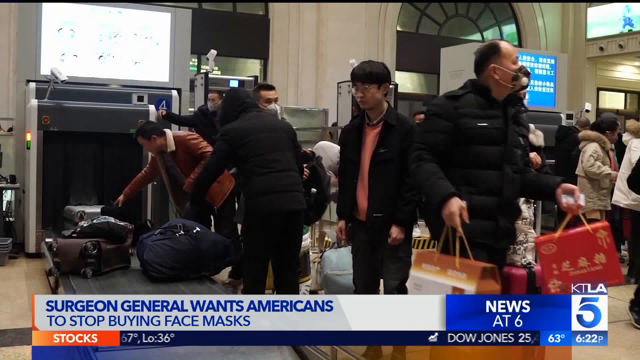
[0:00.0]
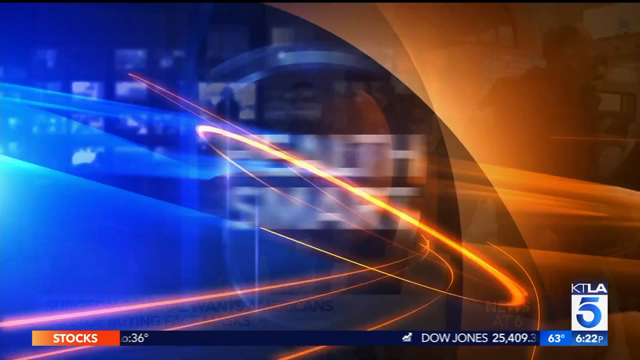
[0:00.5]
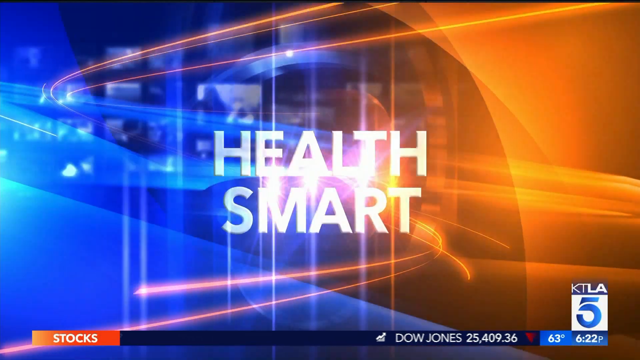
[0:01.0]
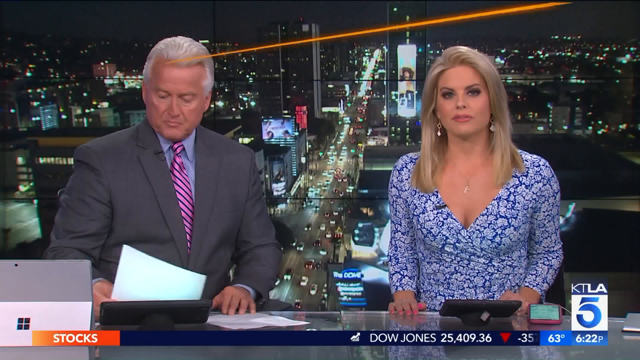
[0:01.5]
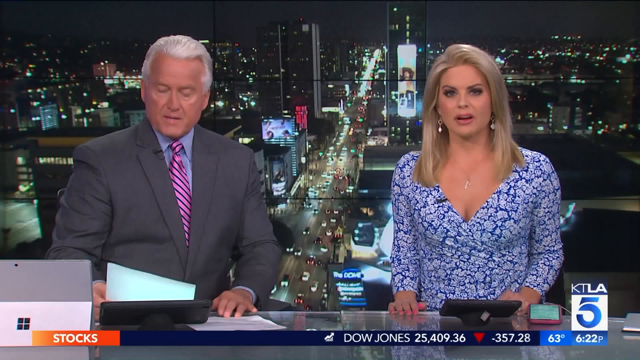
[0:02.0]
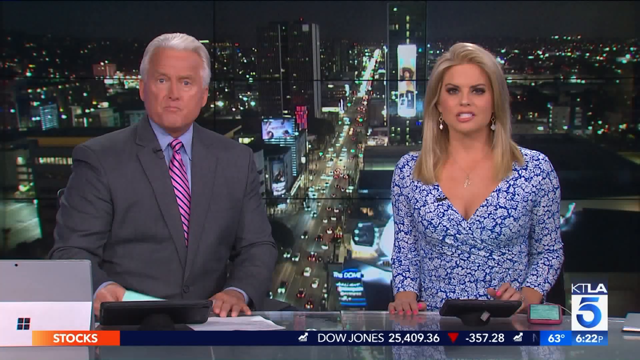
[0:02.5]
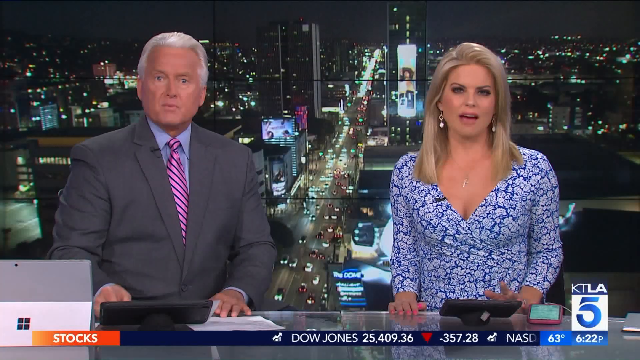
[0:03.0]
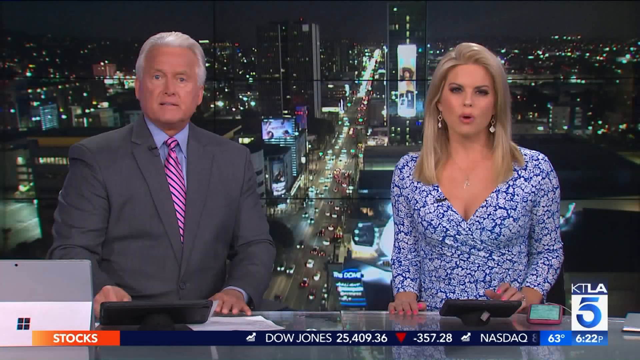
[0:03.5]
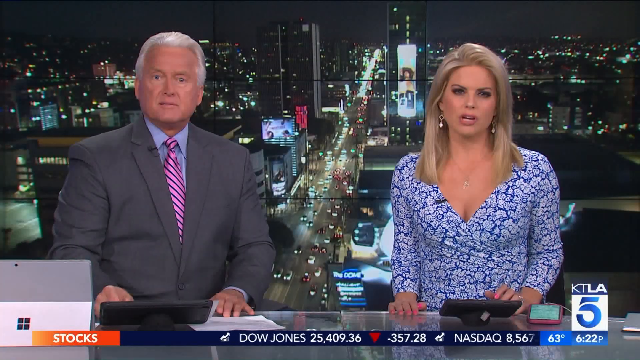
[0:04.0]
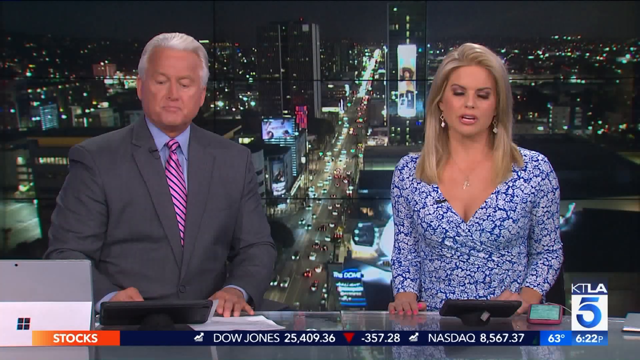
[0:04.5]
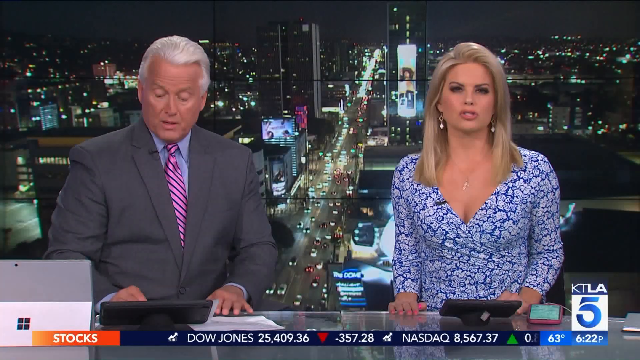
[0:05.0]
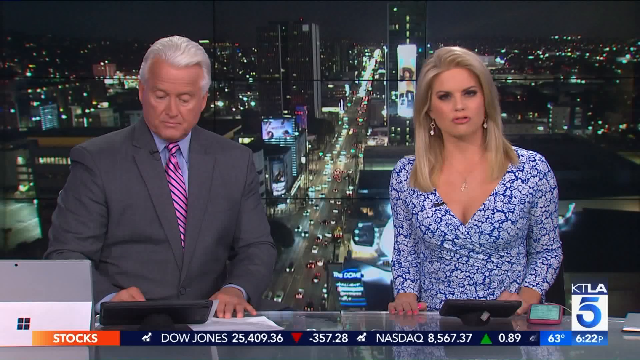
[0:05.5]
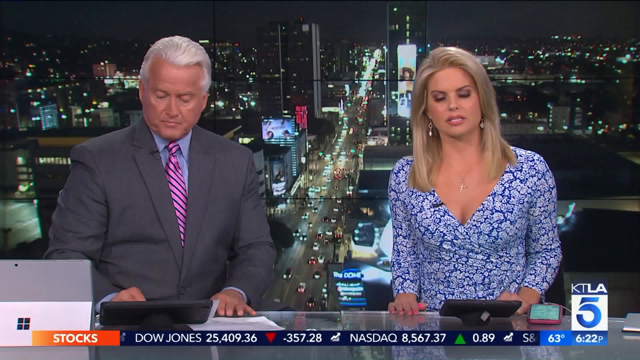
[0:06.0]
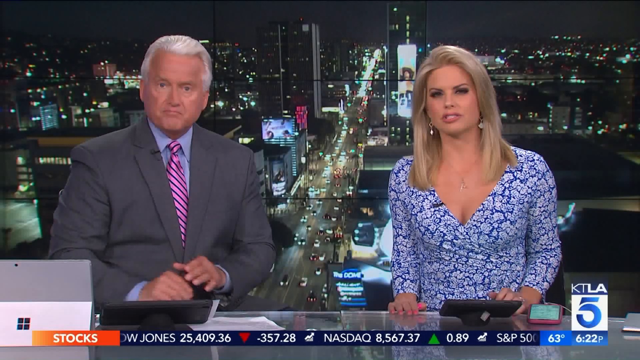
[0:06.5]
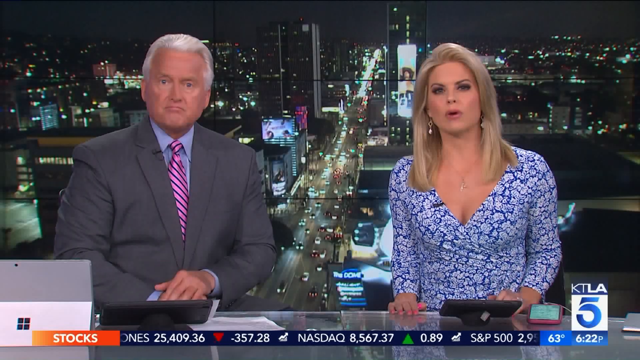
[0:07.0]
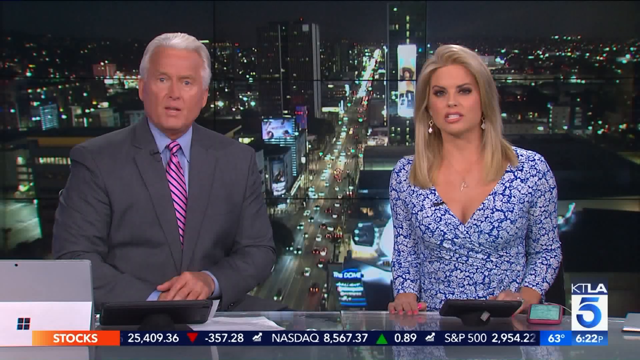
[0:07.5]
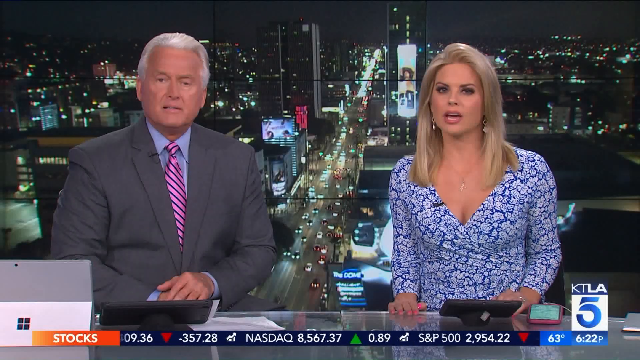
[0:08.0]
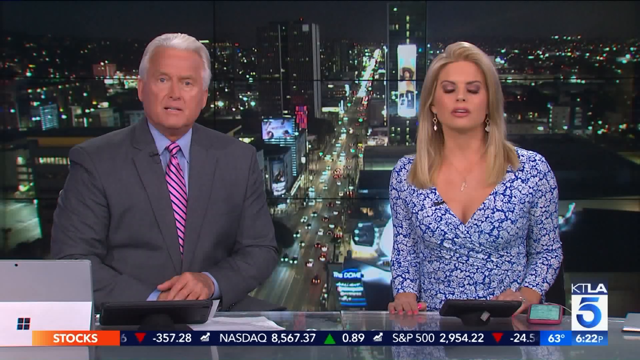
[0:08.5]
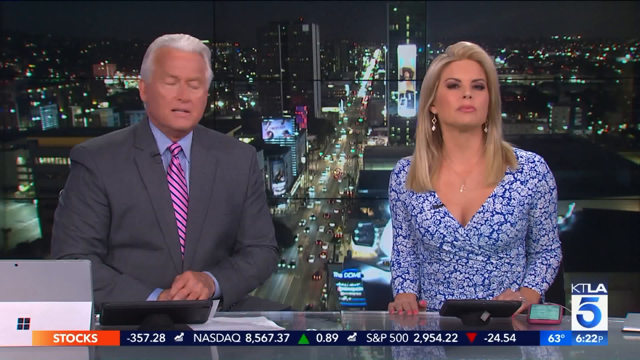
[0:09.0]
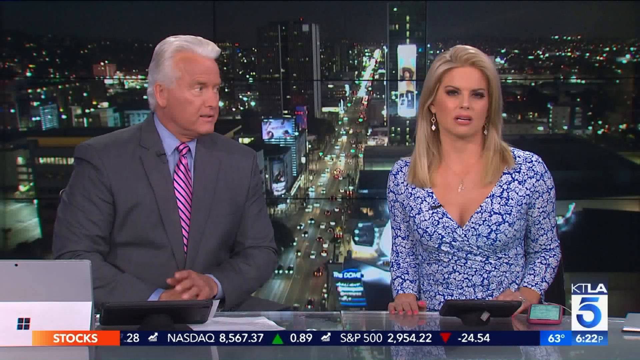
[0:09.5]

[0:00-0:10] A news report opens with people at an airport picking up their bags off a conveyor belt or at a security screening area. The footer at the bottom of the screen says the Surgeon General wants Americans to stop buying face masks. The broadcast is news at six on KTLA-5. A brief screen reading "HealthSmart" appears, followed by two news anchors sitting at a desk, a man on the left and a woman on the right. The man is older and of average build, with white hair, wearing a gray suit with a pink and blue diagonally striped tie. The woman is probably in her late 40s or early 50s, with blonde hair just past her shoulders and dangly earrings, wearing a long-sleeve blue and white floral dress. Both intermittently look at each other before looking back to the camera.